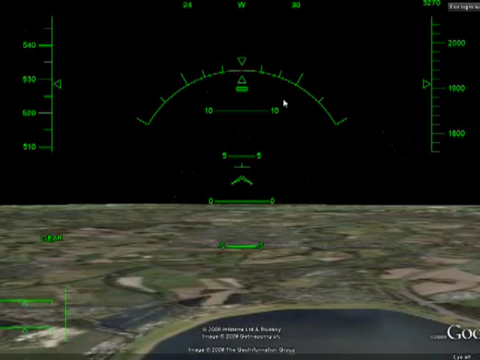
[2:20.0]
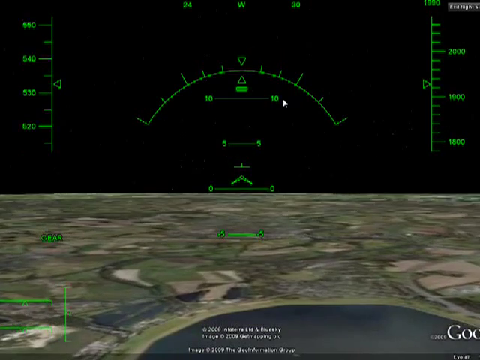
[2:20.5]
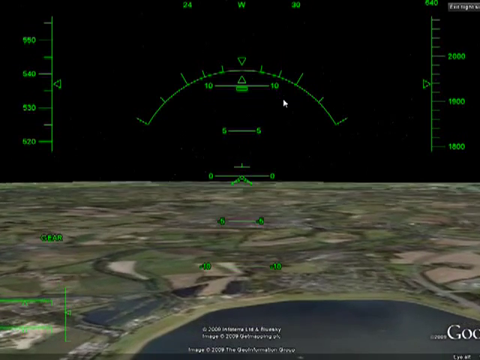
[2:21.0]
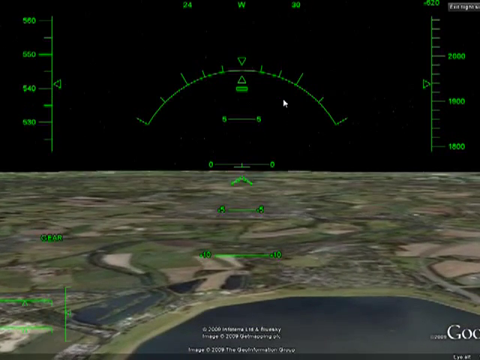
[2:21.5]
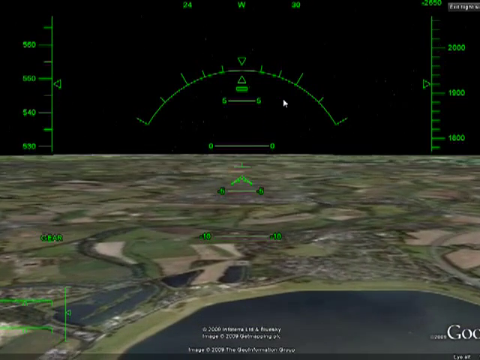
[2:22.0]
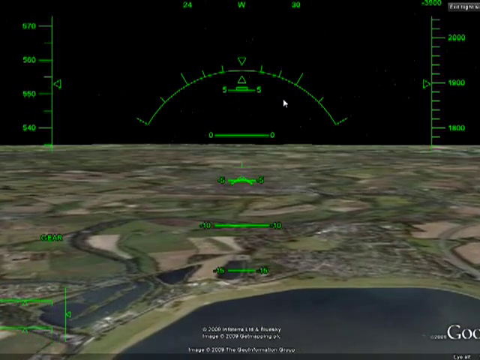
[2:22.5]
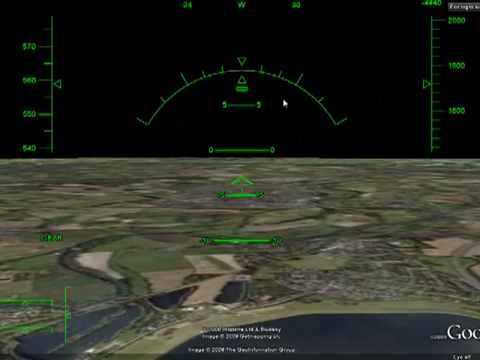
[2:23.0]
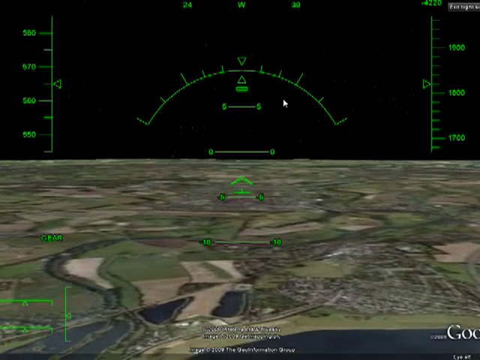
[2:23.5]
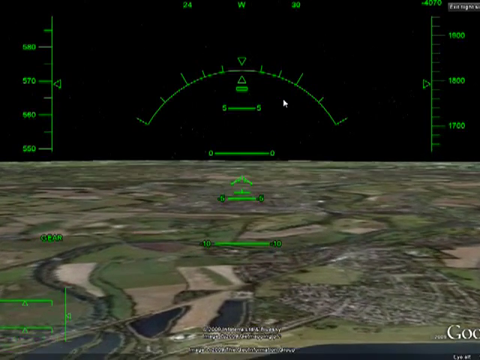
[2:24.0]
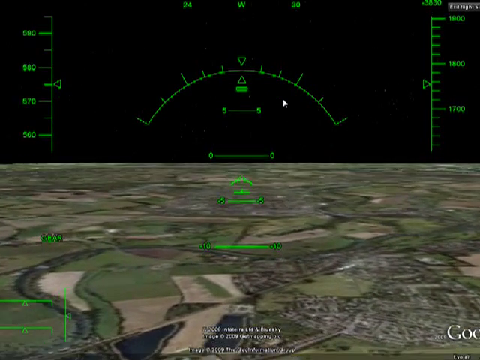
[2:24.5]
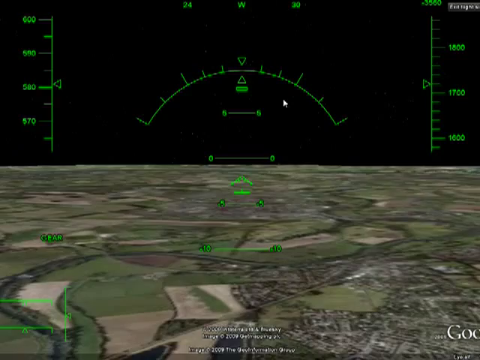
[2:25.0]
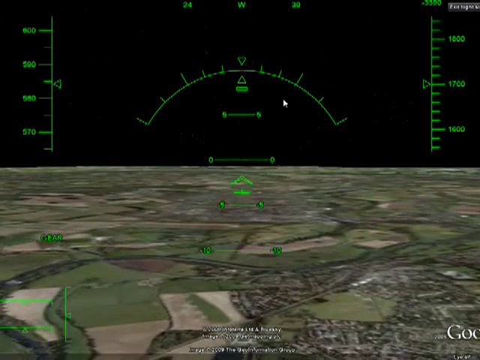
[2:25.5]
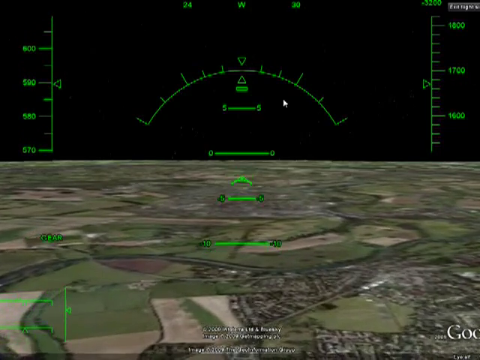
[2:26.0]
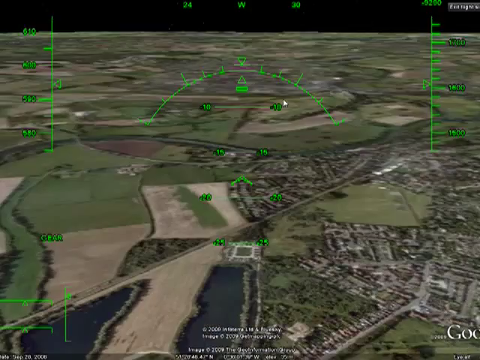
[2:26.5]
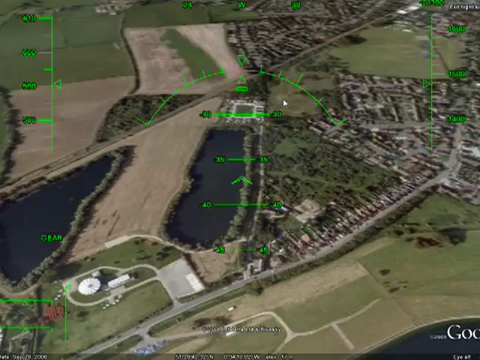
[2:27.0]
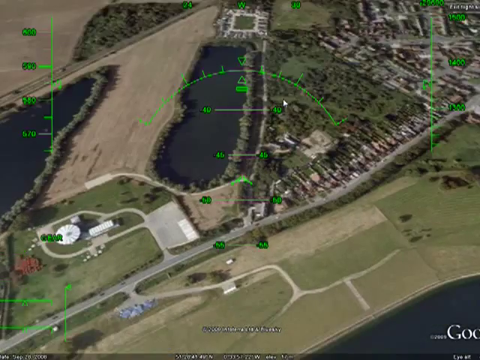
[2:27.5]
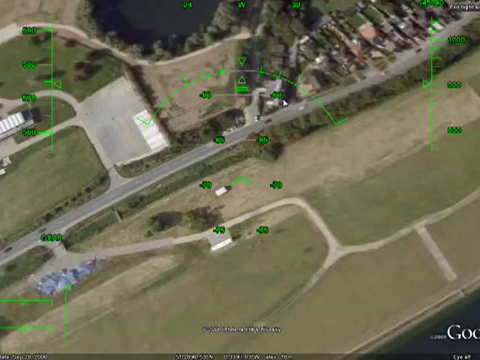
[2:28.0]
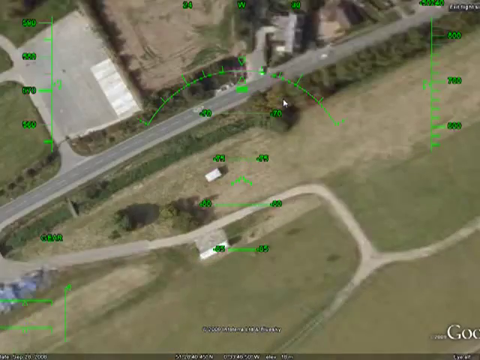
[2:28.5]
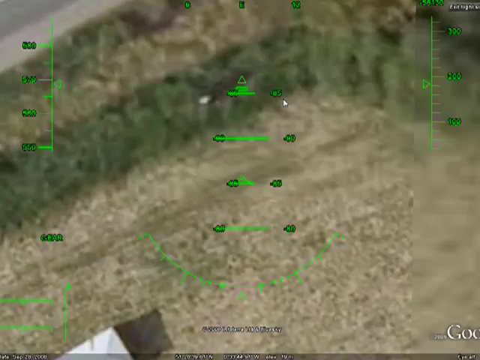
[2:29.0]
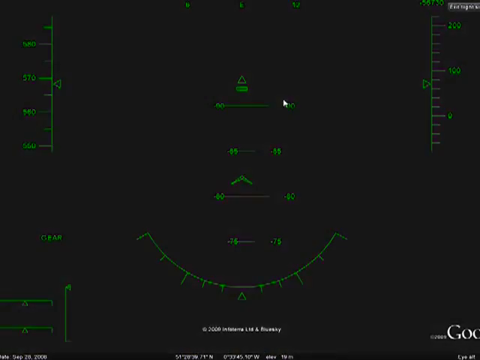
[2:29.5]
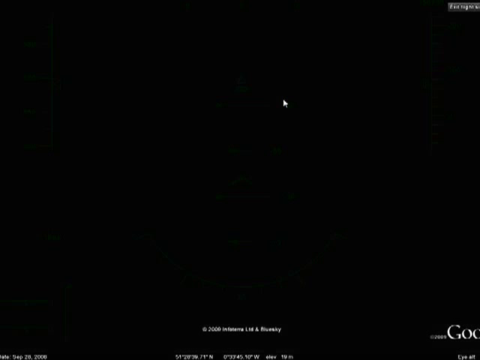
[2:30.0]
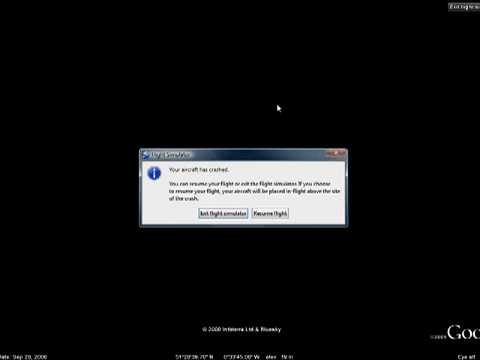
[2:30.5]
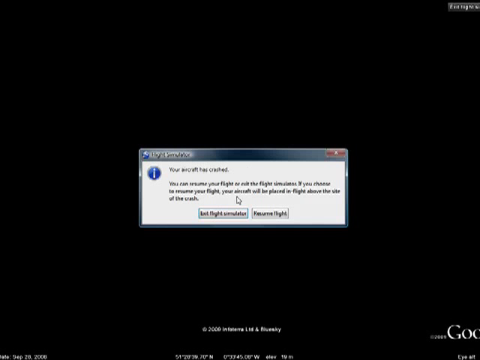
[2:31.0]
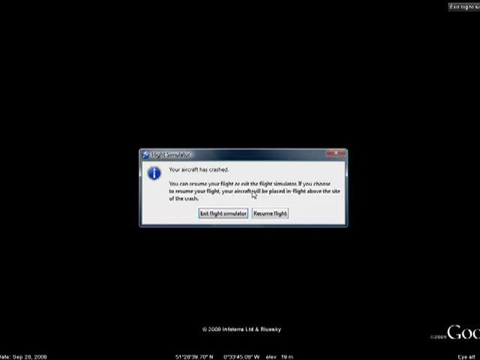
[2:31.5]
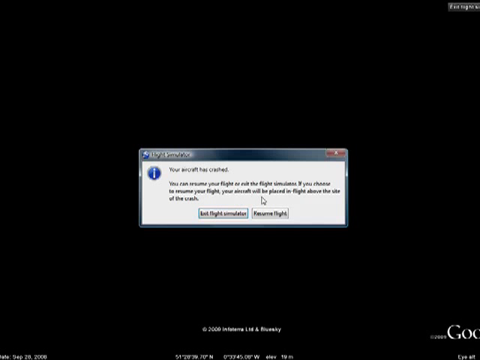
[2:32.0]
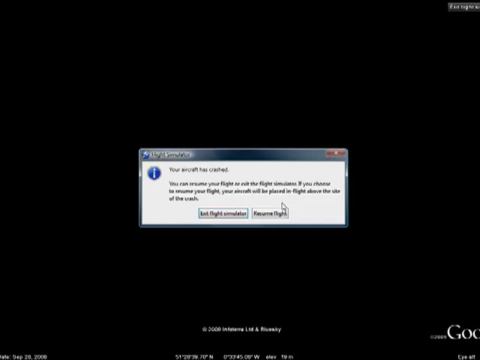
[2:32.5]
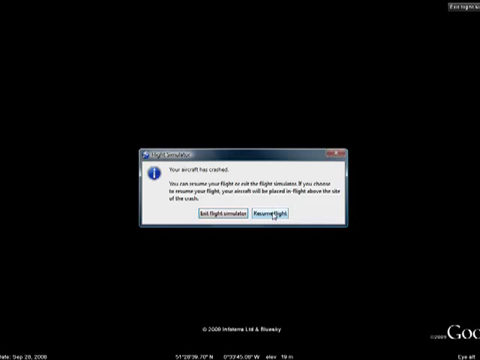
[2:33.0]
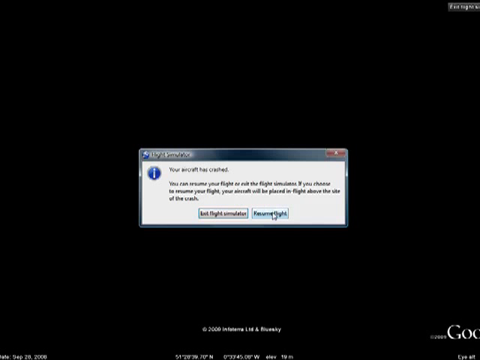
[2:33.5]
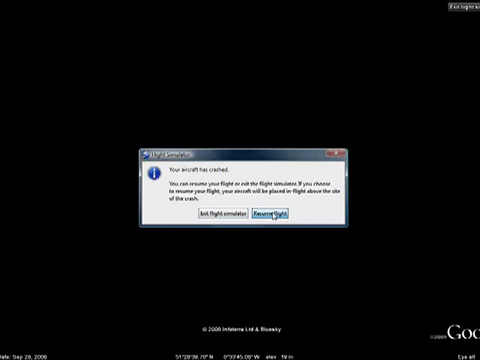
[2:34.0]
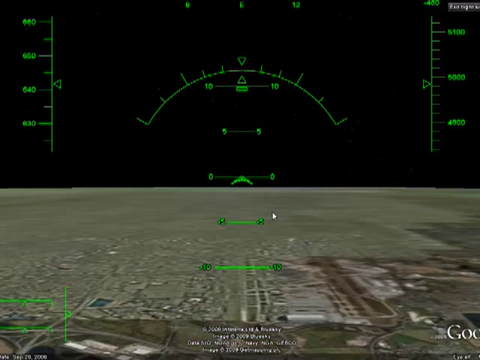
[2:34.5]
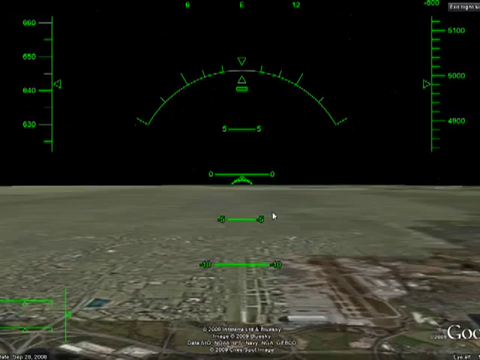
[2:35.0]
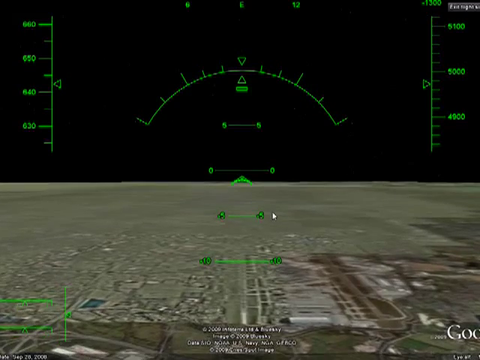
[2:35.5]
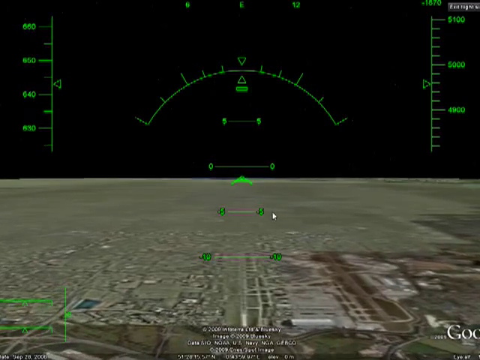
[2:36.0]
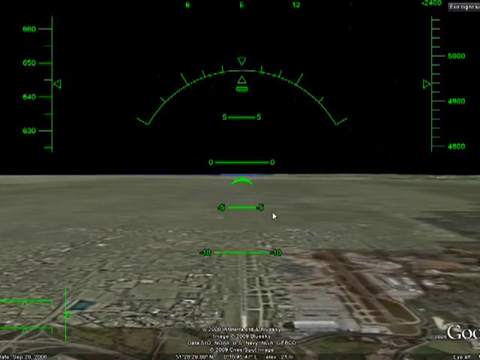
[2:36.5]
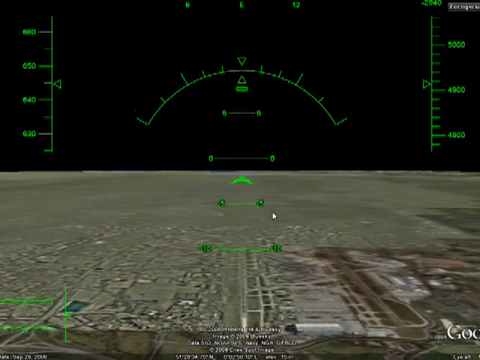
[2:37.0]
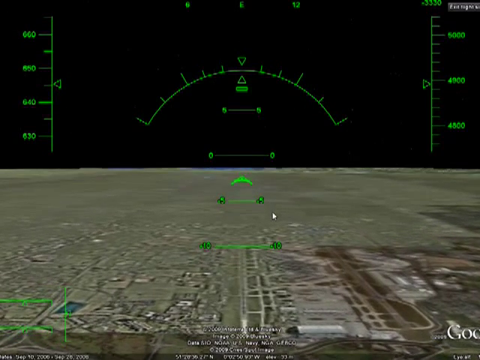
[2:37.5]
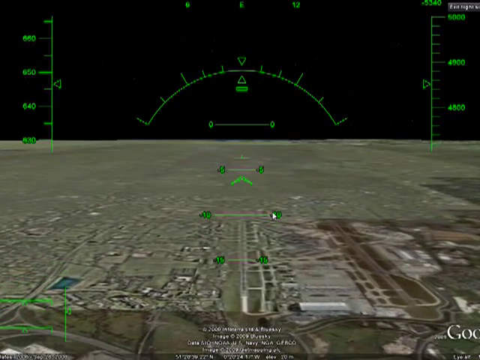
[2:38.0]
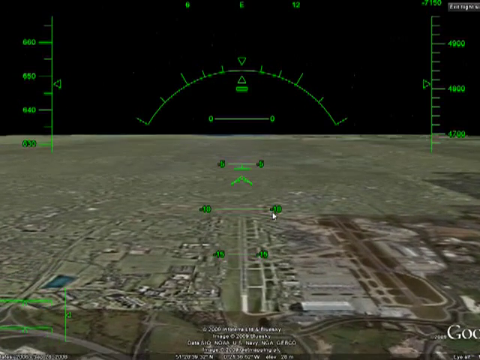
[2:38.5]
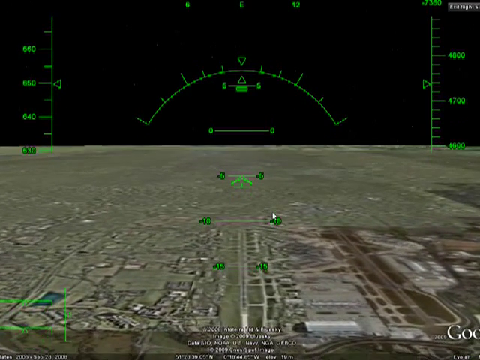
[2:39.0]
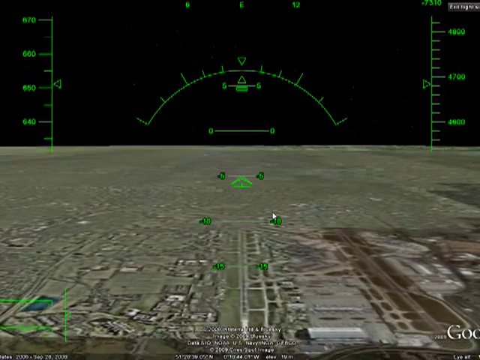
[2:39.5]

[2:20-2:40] The plane continues to fly along over the earth, then suddenly hurtles extremely quickly toward the ground and simulates a crash, nosediving from a height of 1700 feet straight down into a field. There is no explosion. The screen fades to black and a pop-up window appears reading "Flight simulator, your aircraft has crashed. You can resume your flight"; the rest is difficult to read because the video is pixelated. A copyright notice at the bottom apparently says either 2006 or 2008. The menu offers two options, resume flight and exit the flight simulator, and neither has been chosen yet.